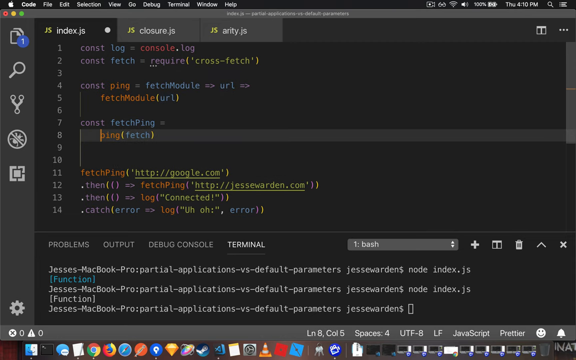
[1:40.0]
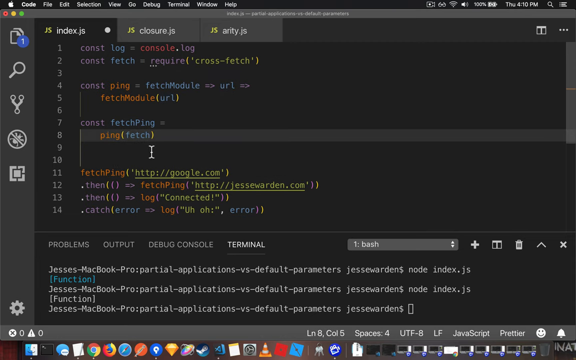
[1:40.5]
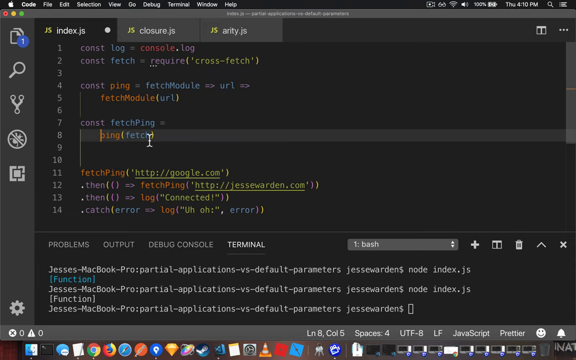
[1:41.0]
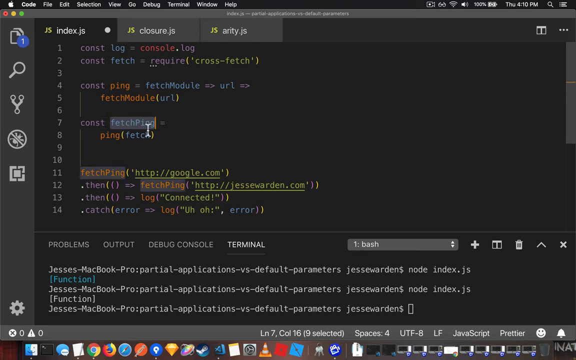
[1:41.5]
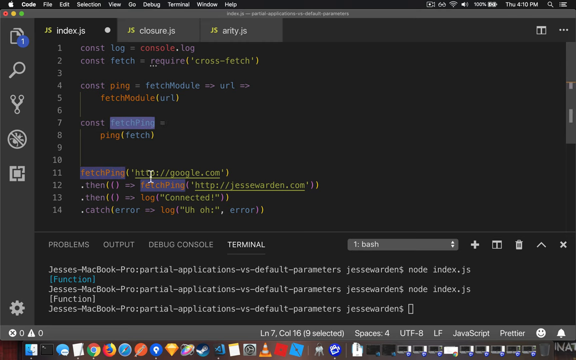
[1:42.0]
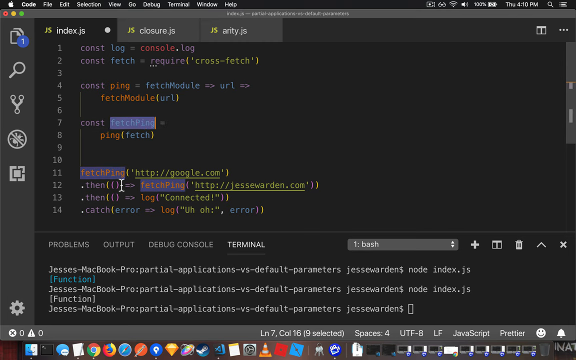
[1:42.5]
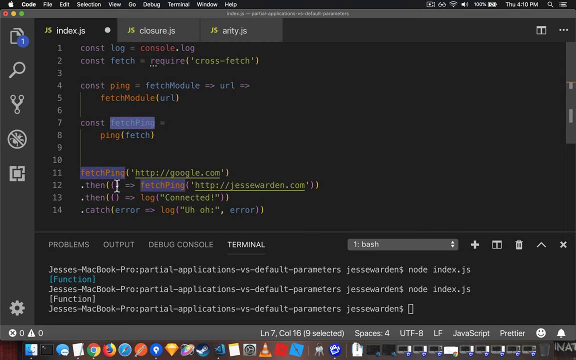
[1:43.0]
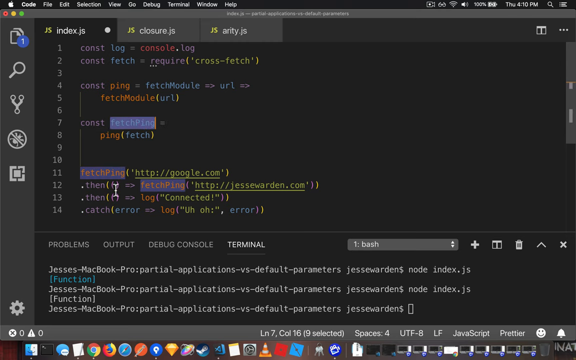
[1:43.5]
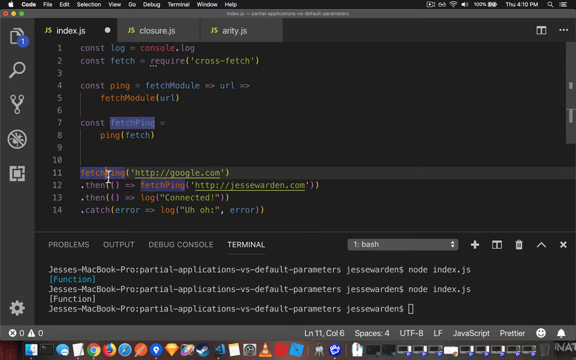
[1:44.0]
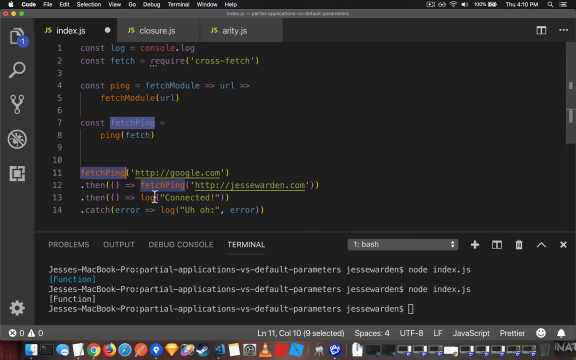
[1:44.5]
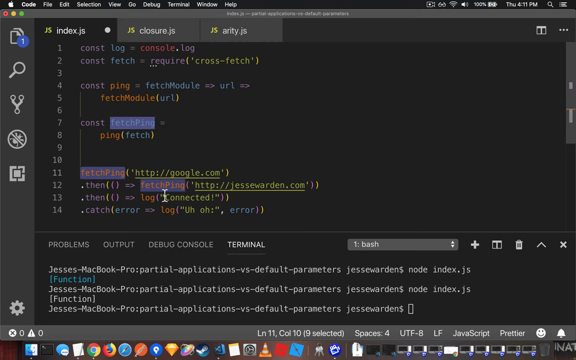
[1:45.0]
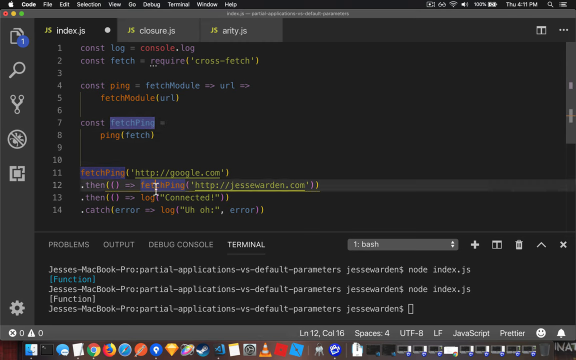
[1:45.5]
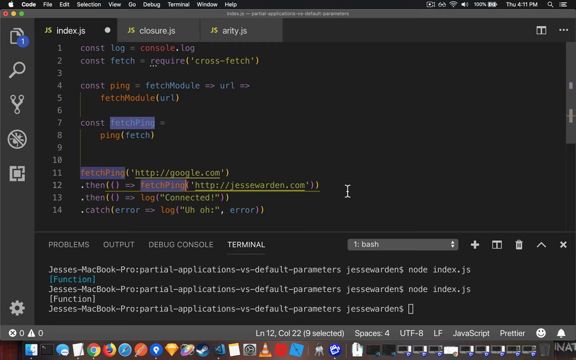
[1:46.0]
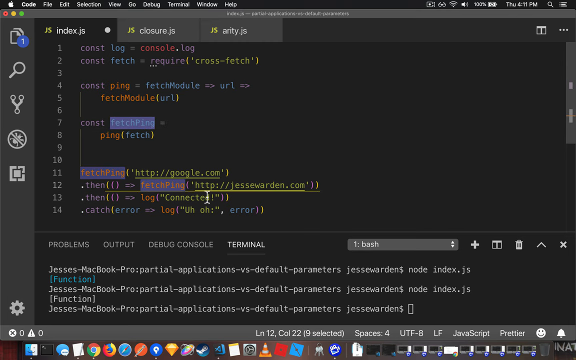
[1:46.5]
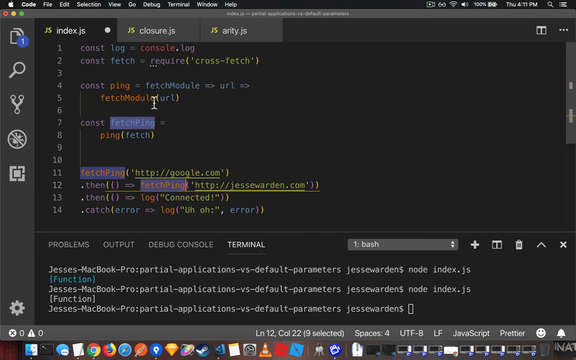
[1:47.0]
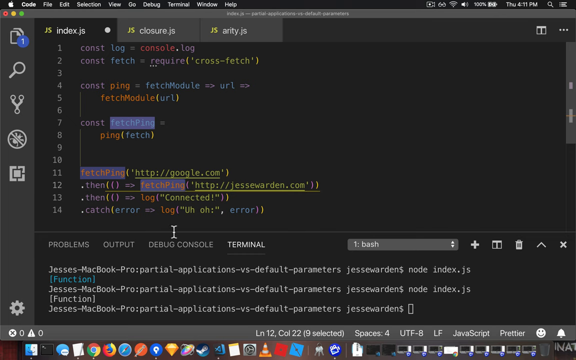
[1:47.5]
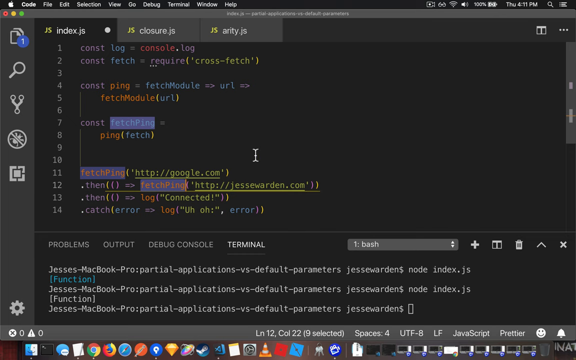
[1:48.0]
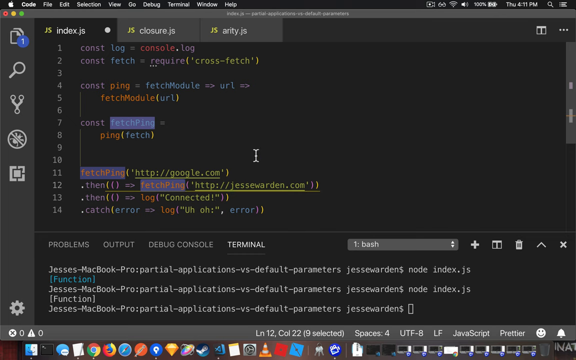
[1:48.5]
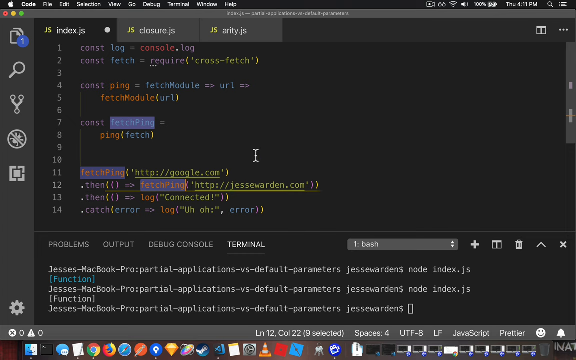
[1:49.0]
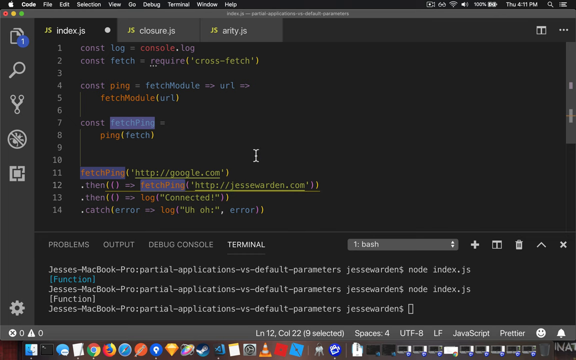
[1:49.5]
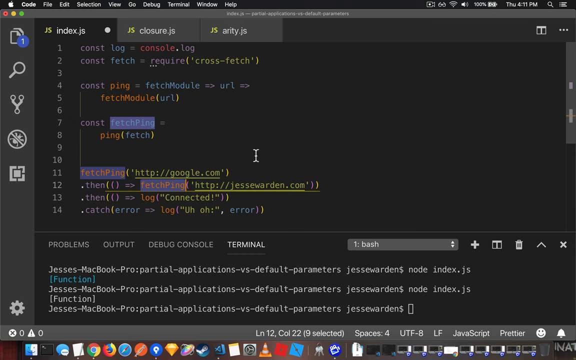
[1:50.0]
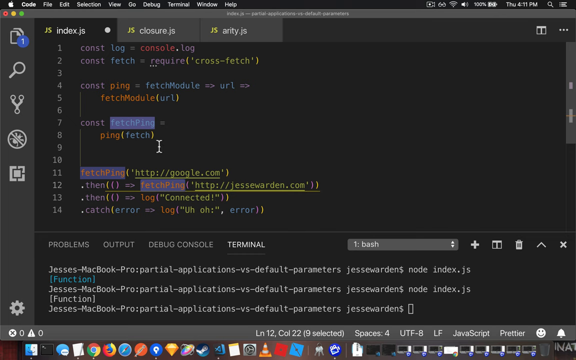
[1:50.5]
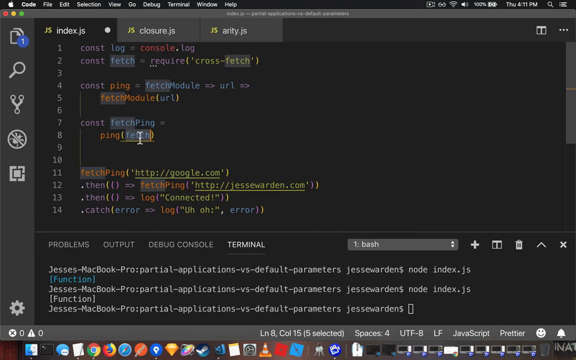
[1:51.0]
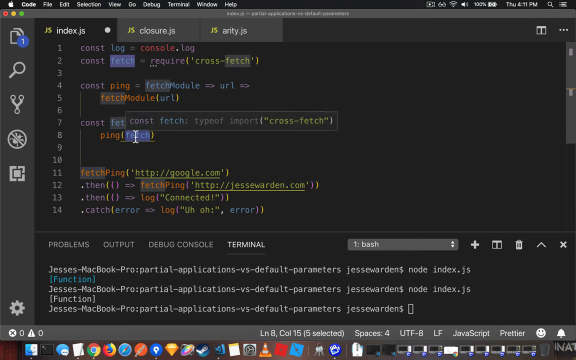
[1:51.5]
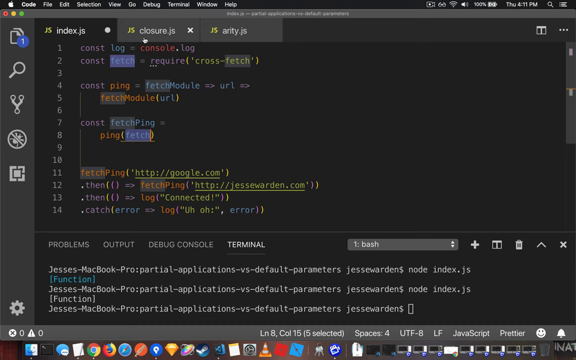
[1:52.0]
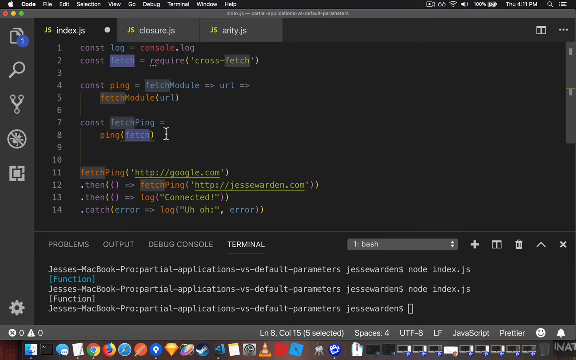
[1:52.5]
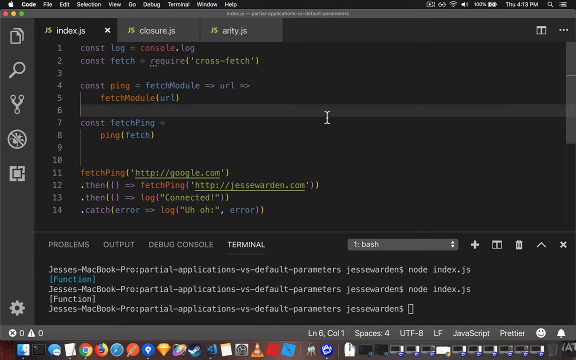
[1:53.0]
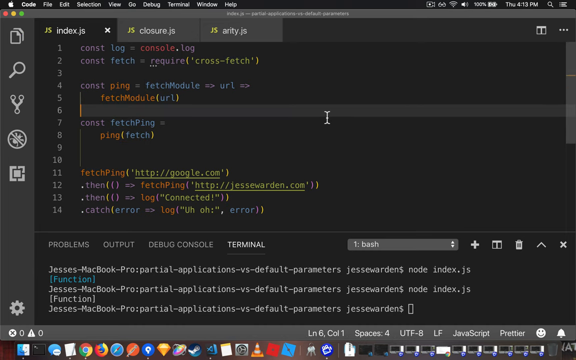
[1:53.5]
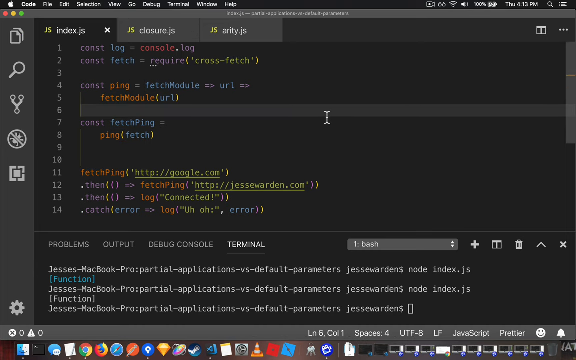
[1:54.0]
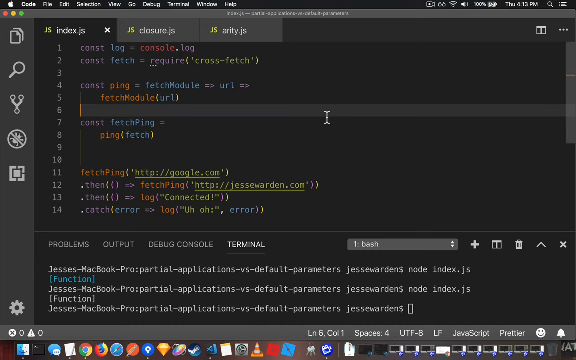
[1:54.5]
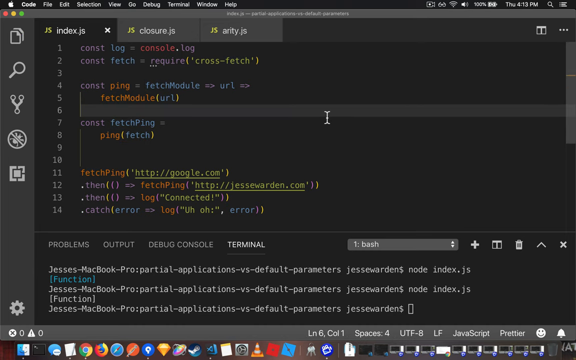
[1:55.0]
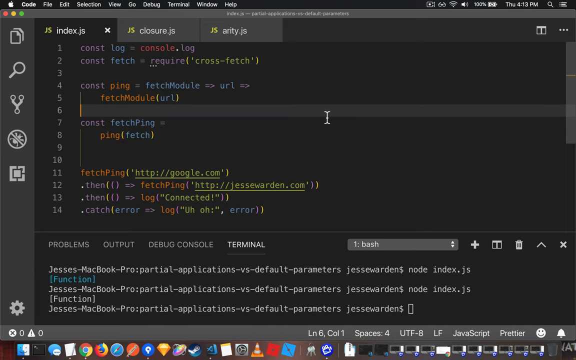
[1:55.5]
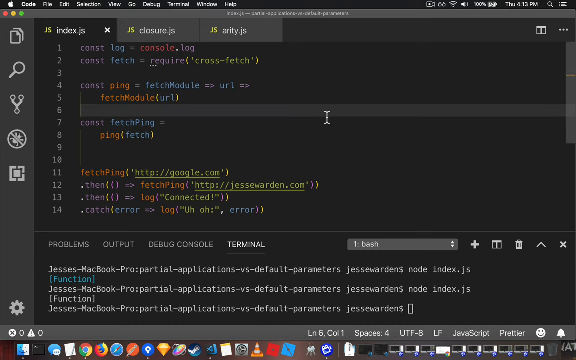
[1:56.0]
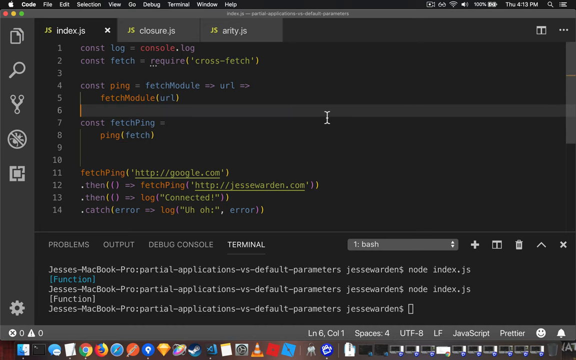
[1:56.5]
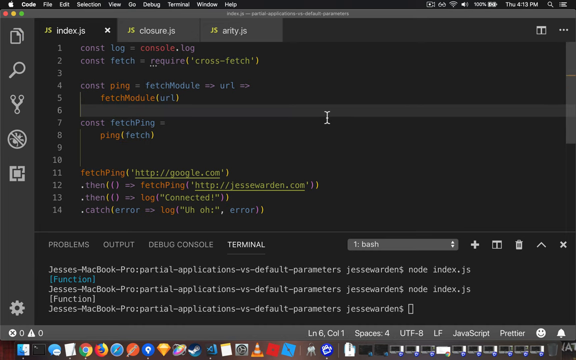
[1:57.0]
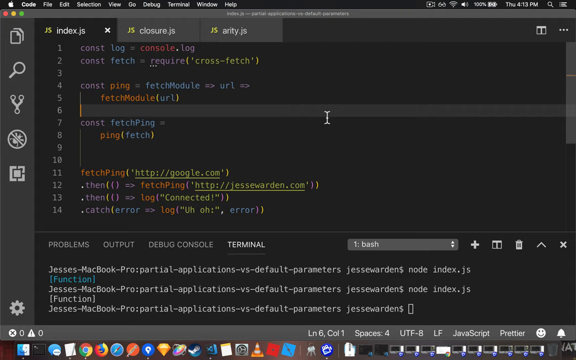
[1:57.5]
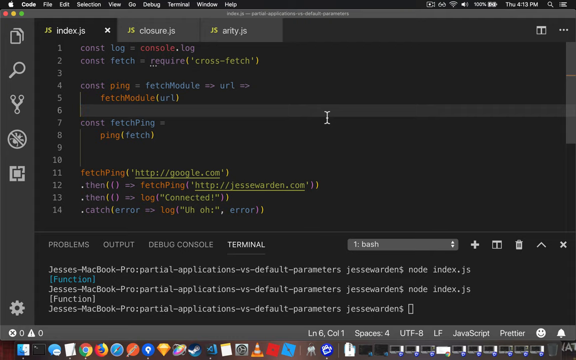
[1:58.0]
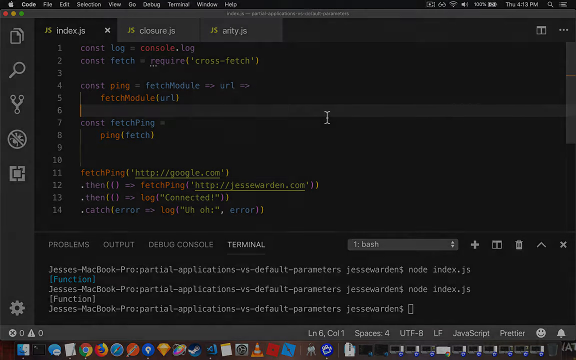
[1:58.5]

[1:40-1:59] A lot of code that looks like JavaScript appears over a gray background on an Apple platform, with the Apple navigation bar at the top. White numbers from 1 to 14 on the left show 14 lines of code, which read "const log equals console.log, const fetch equals require cross-fetch, const ping equals fetch module equals URL, fetch module URL, const ping, fetch ping equals ping fetch, fetch ping google.com, then fetch ping jessewarden.com, then log connected, catch error log, error." The white cursor is on line eight, which reads "ping fetch." It double-clicks fetch ping on line seven, highlighting all the other fetch pings, then moves down to the other fetch pings at the bottom and circles over them, making a couple of counterclockwise circles as if explaining something. It then double-clicks the fetch under ping fetch, highlighting all the other fetches. The video appears to pause, nothing happens, and everything fades out.